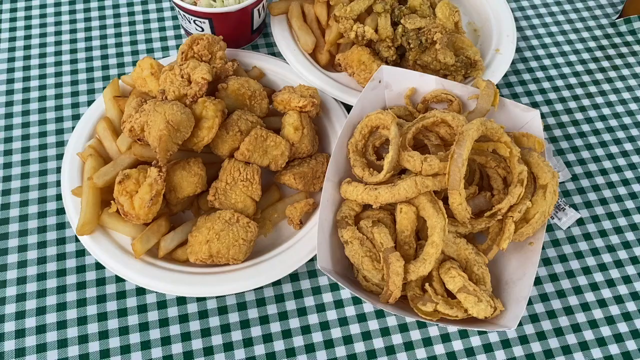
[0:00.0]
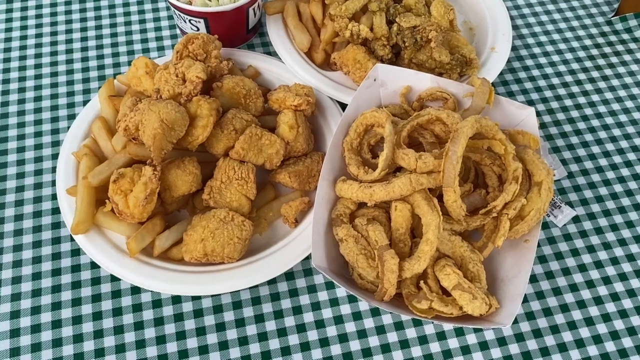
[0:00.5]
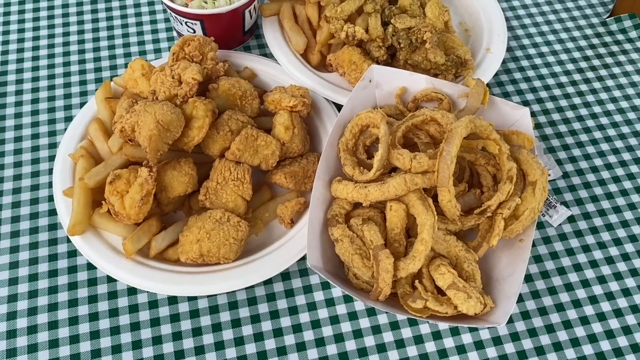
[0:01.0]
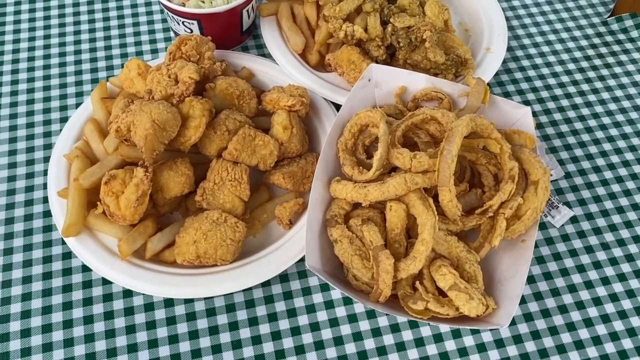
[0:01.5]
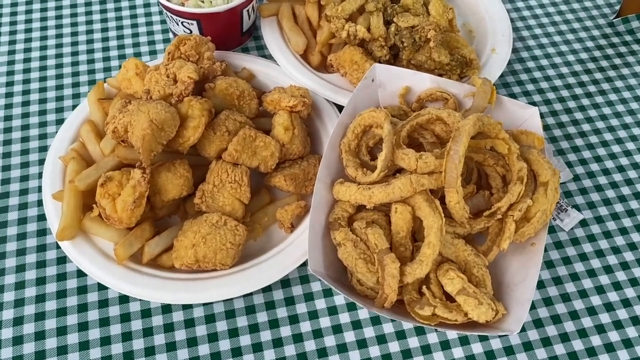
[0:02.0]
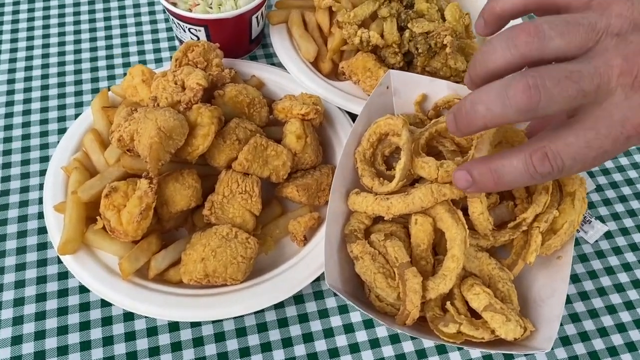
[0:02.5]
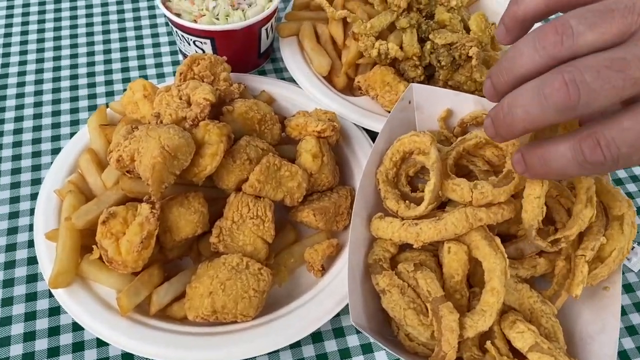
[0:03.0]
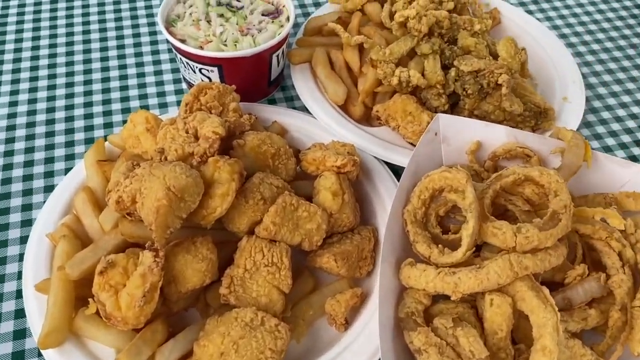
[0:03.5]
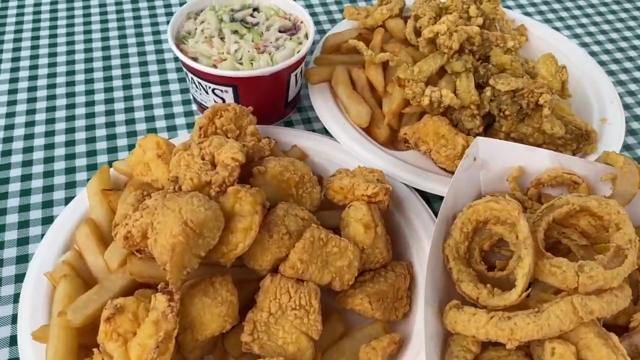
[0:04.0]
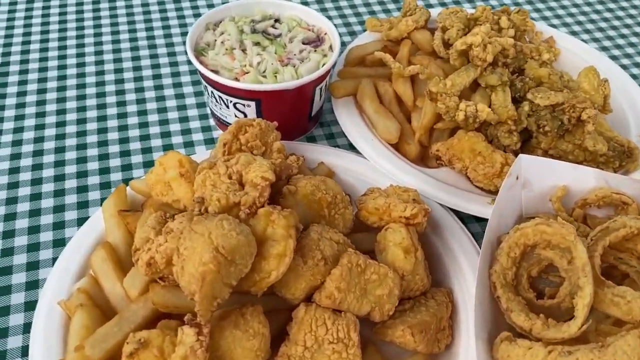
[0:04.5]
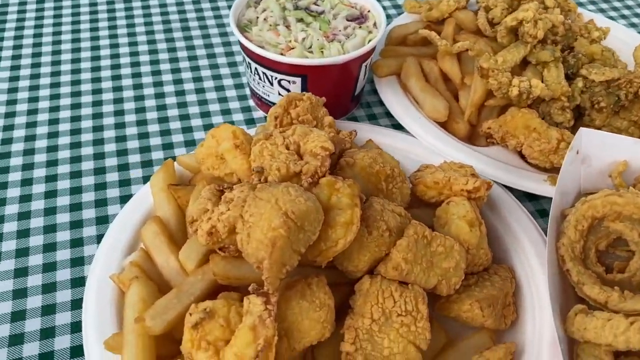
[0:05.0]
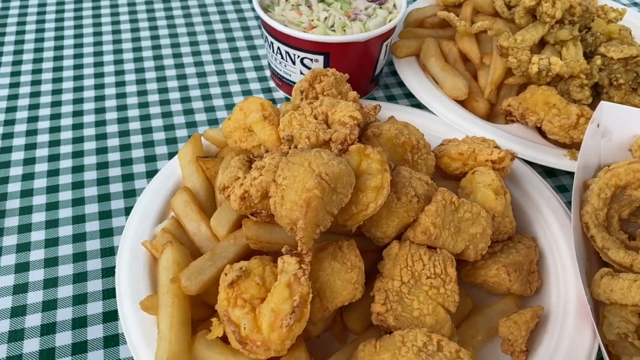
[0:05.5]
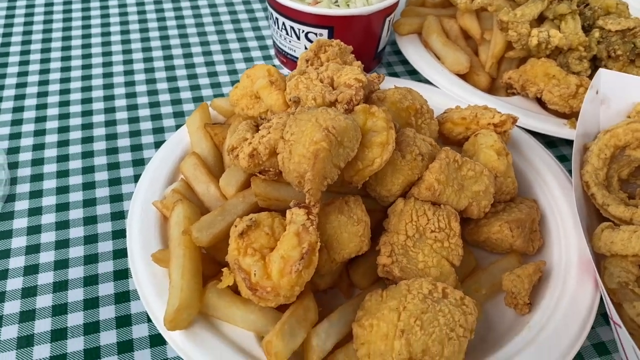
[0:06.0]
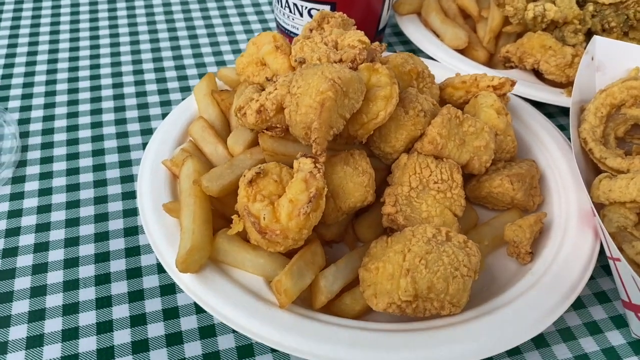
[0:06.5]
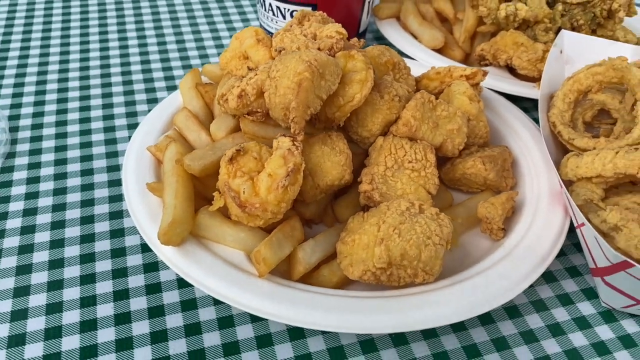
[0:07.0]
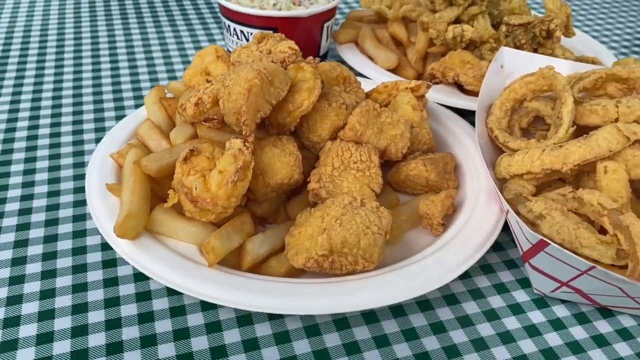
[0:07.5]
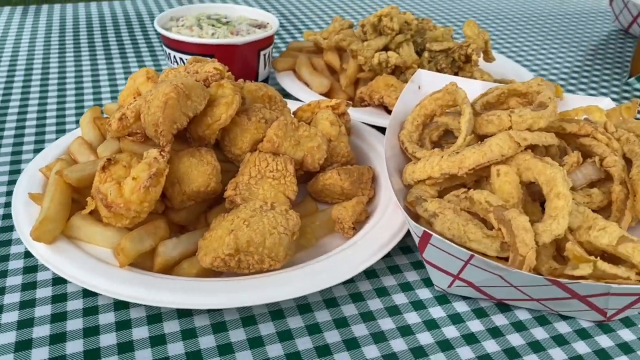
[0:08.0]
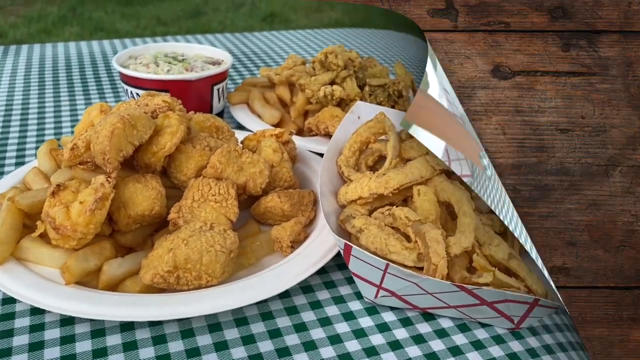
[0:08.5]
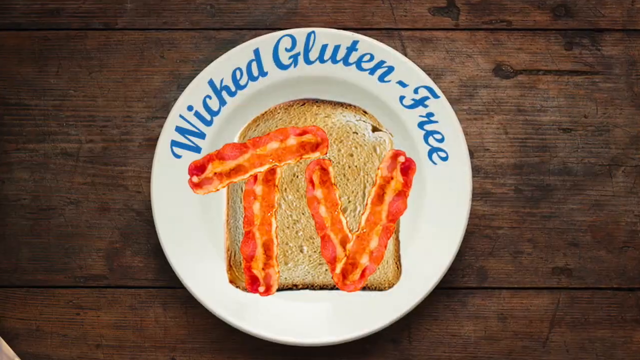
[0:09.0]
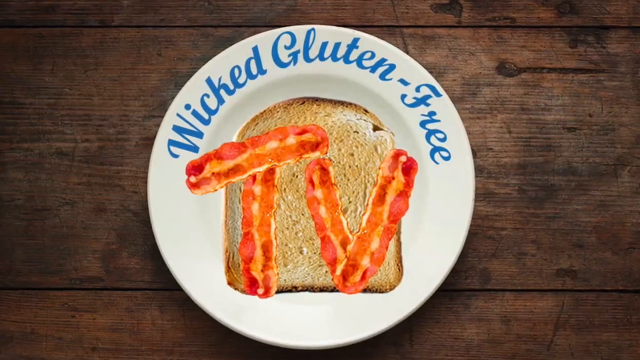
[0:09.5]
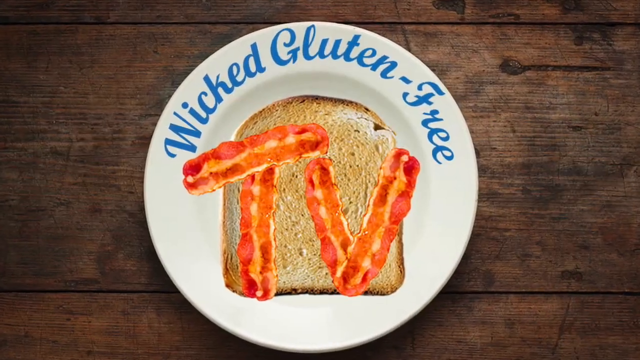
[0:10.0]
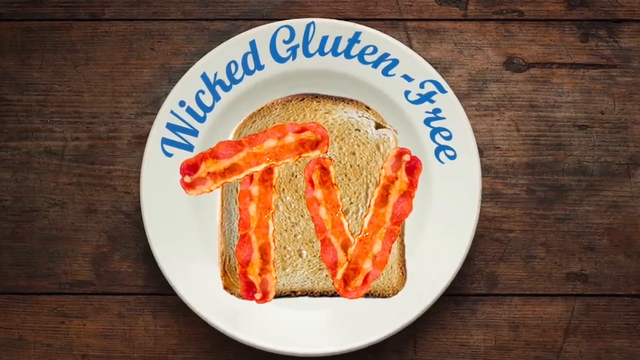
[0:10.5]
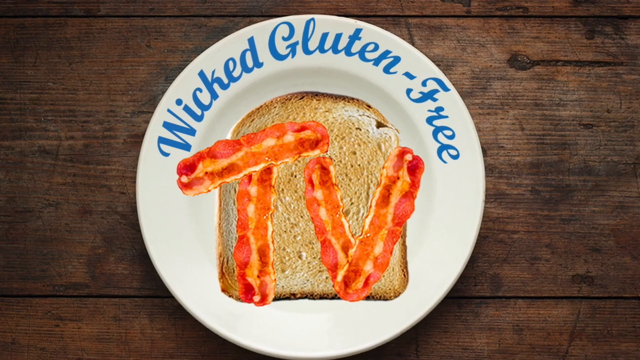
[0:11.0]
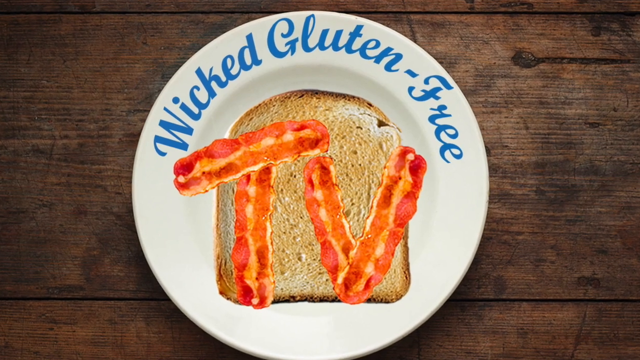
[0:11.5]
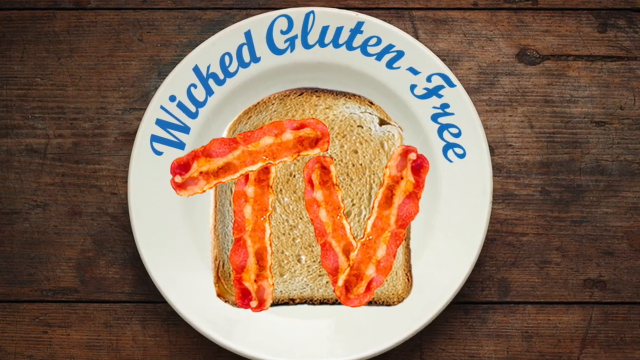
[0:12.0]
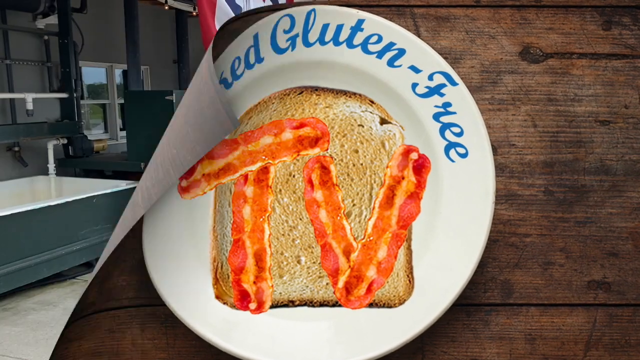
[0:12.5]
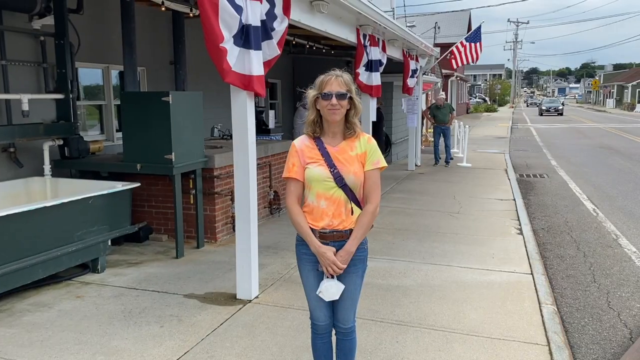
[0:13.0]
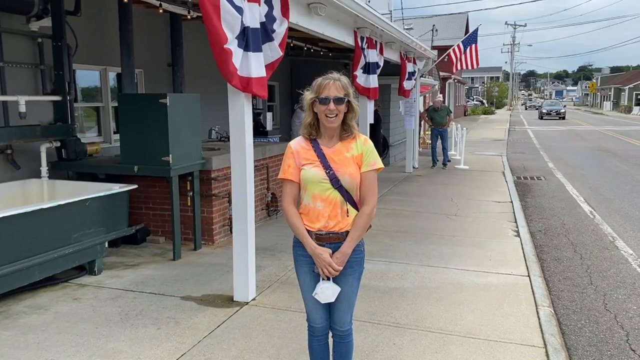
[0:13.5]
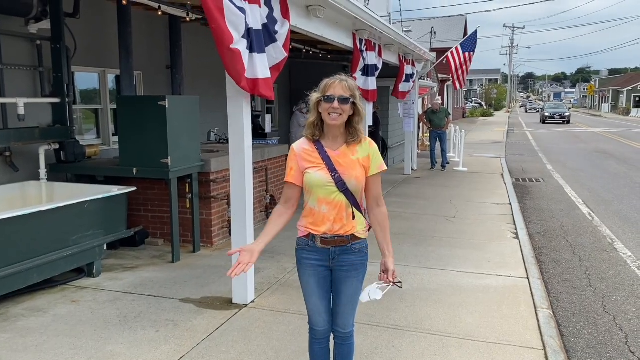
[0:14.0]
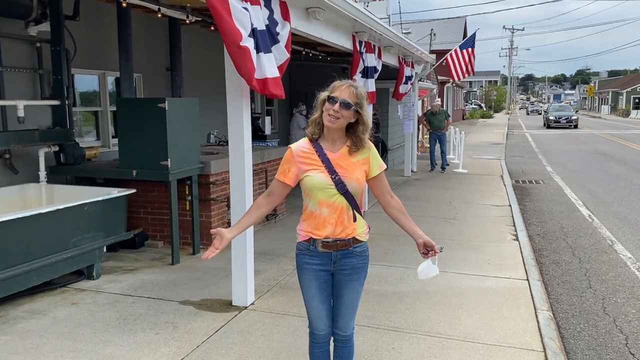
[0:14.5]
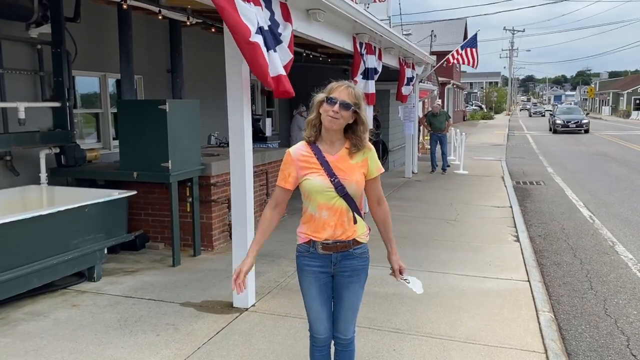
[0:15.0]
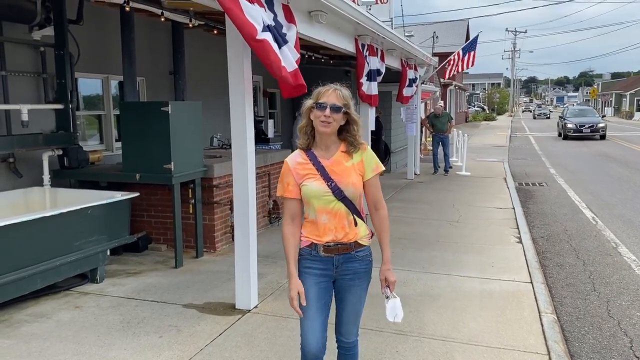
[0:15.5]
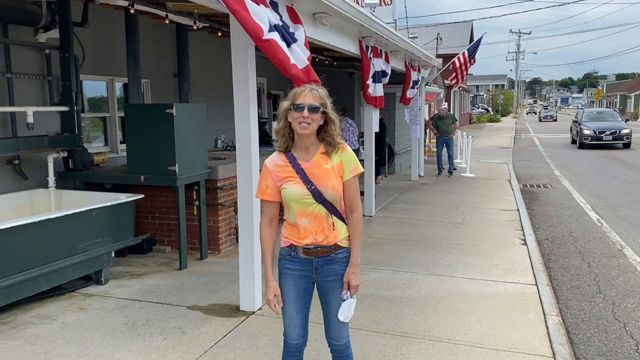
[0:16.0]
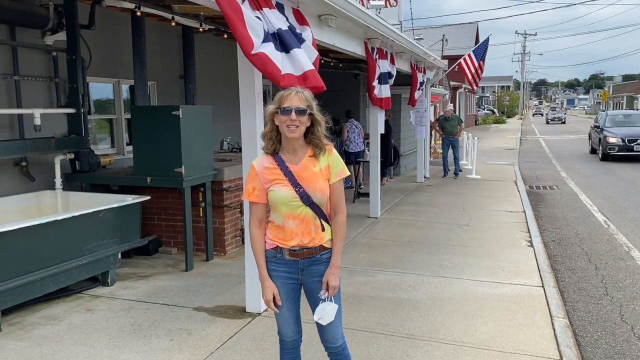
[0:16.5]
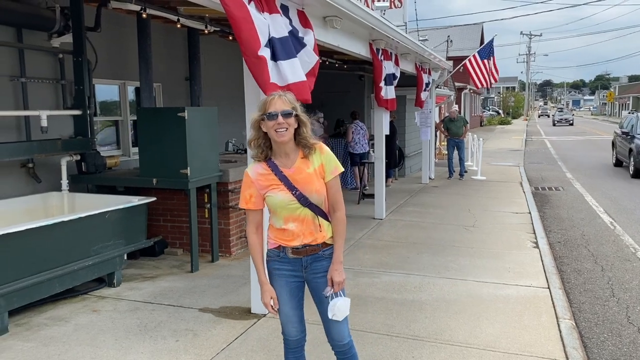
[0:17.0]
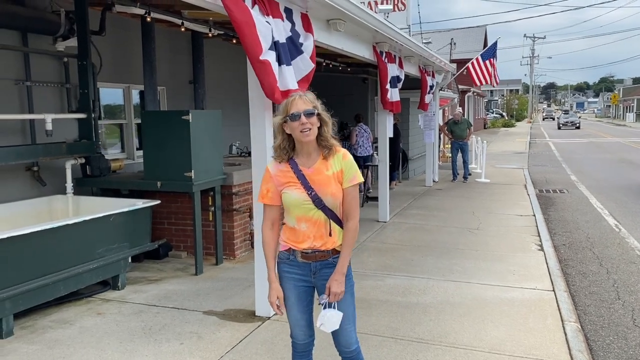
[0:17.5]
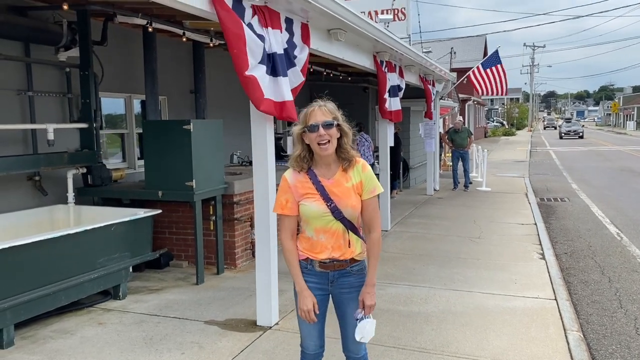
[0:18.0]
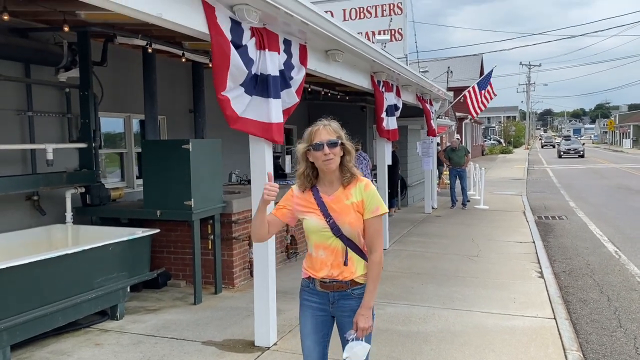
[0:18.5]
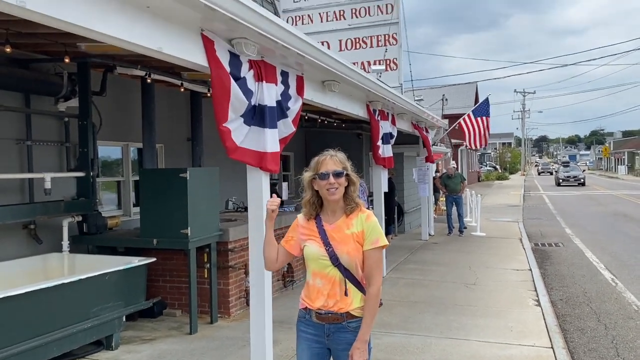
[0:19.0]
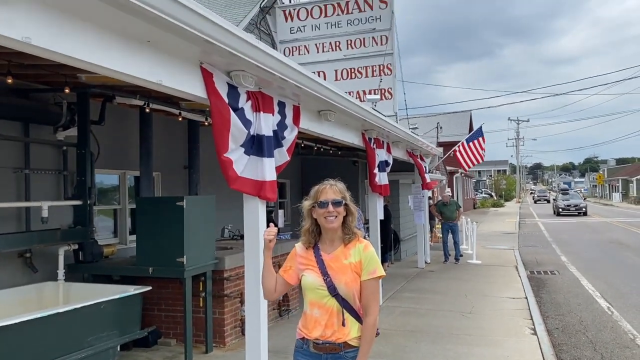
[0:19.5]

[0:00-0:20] A close-up shows a green and white gingham tablecloth. On it, towards the right of the screen, is a square paper basket of onion rings; towards the left is a styrofoam plate of chips and what looks like breaded mushrooms; towards the top is another plate of chips and something else battered and fried, plus a drink. The camera zooms in as a hand picks up an onion ring, then zooms in for close-ups of the different plates. The video cuts to an animated title screen: a cartoon table with a white plate in the centre and a piece of toast in the middle, on top of which "TV" is written in streaky bacon, with "Wicked Gluten-Free" in green letters around the top. Next, a woman stands outside what looks like a strip mall in America, with an American flag flying. She is short, with medium-length wavy brown hair, and wears sunglasses, tight jeans and an orange and yellow tie-dye t-shirt.